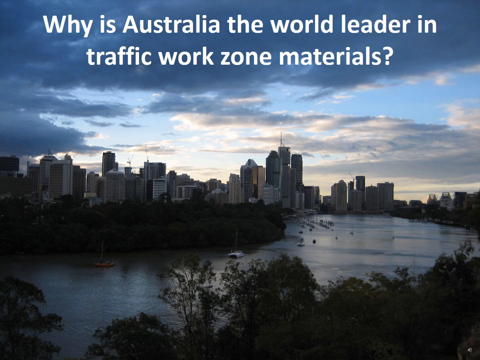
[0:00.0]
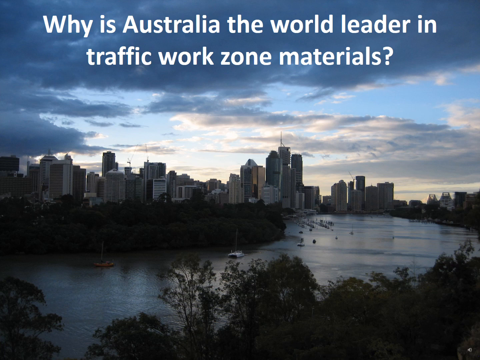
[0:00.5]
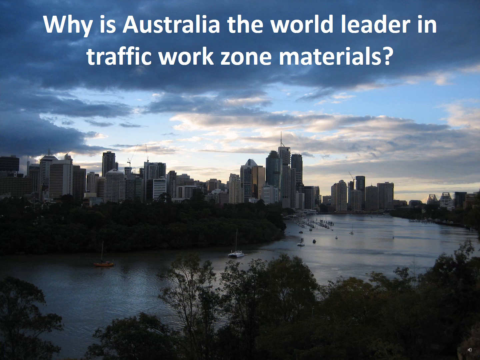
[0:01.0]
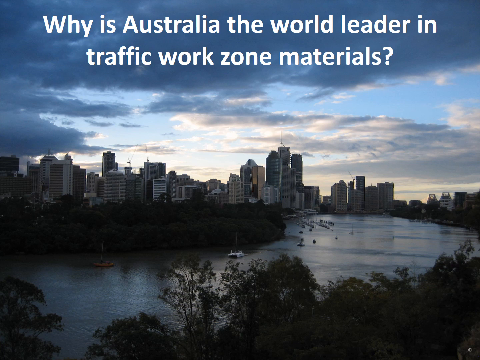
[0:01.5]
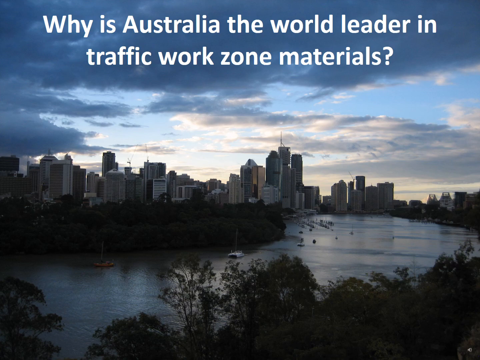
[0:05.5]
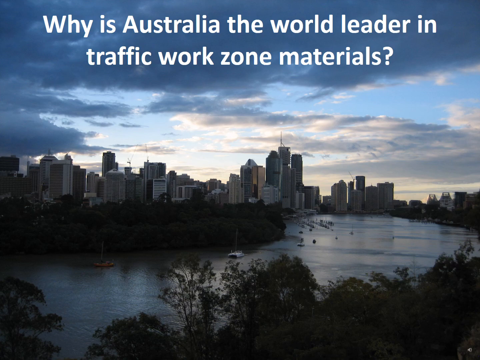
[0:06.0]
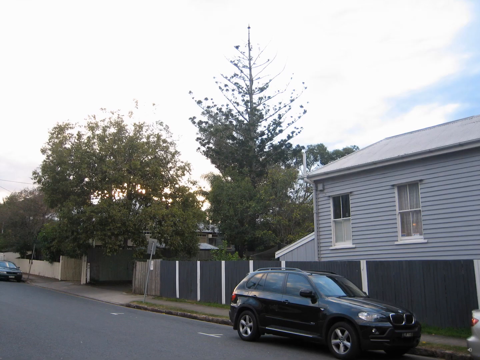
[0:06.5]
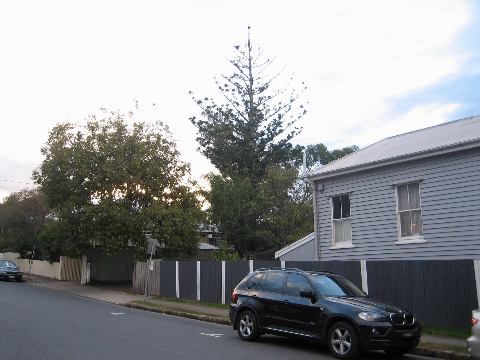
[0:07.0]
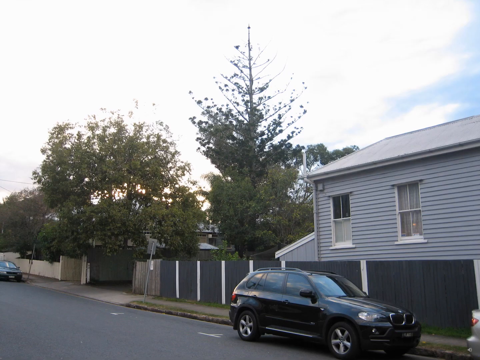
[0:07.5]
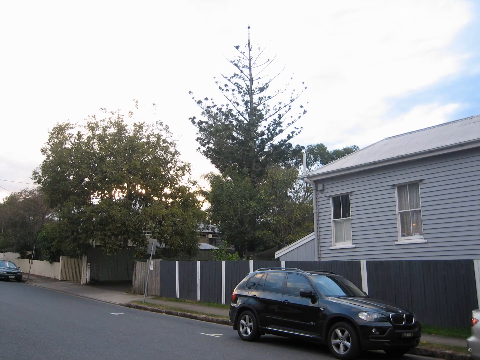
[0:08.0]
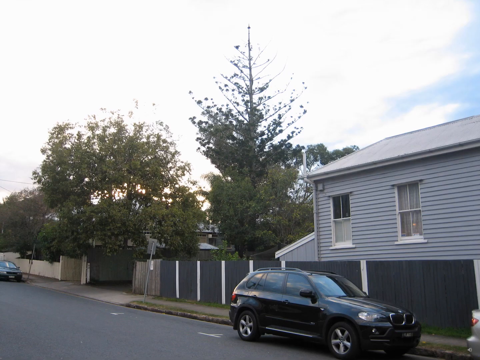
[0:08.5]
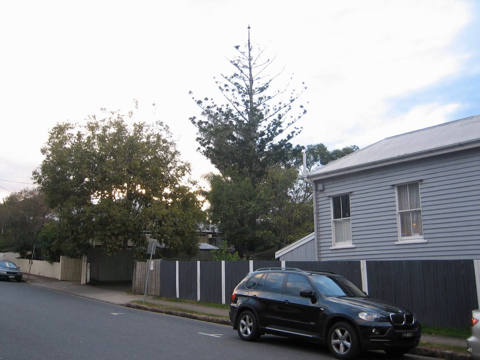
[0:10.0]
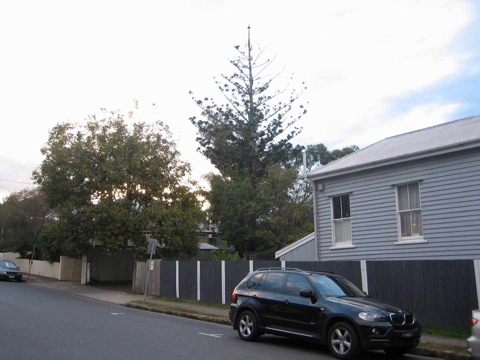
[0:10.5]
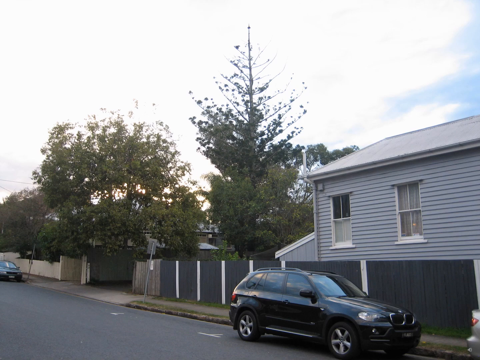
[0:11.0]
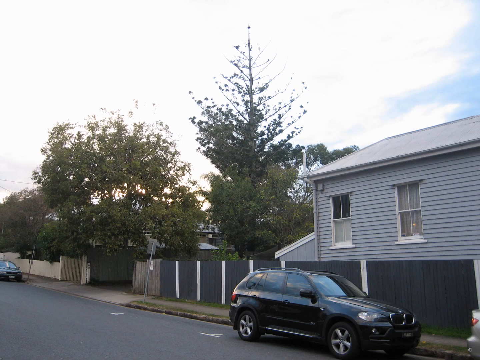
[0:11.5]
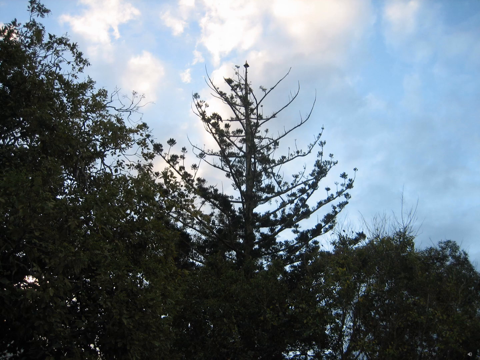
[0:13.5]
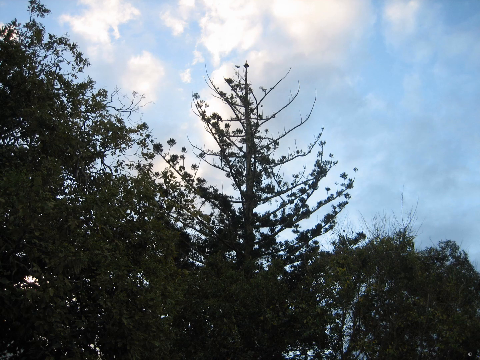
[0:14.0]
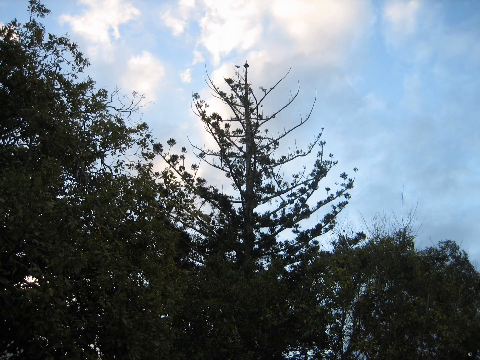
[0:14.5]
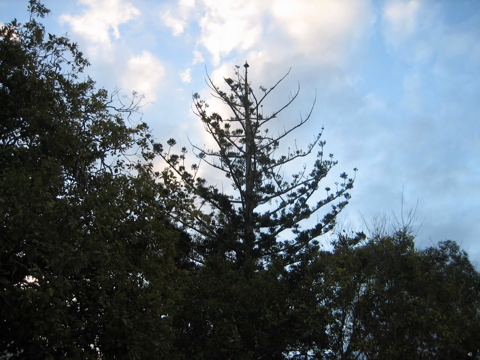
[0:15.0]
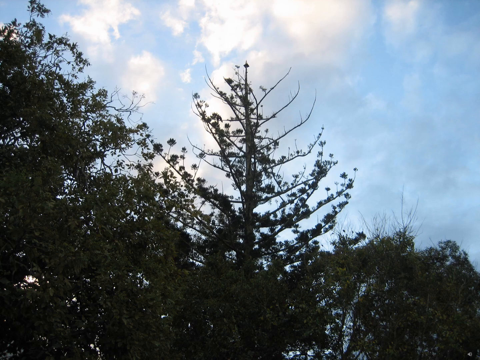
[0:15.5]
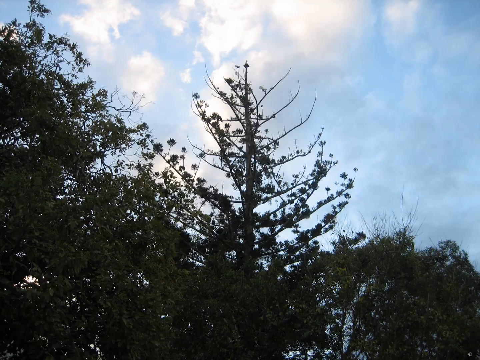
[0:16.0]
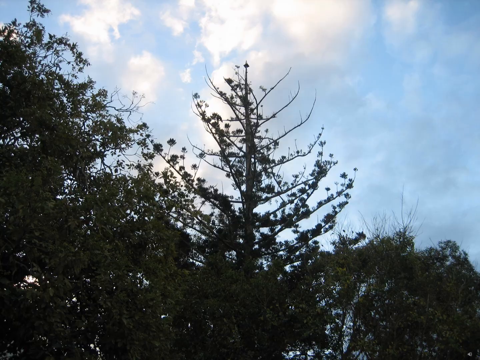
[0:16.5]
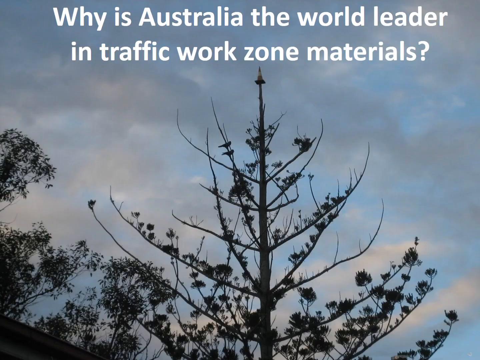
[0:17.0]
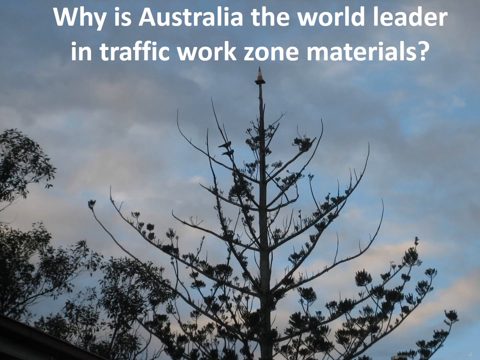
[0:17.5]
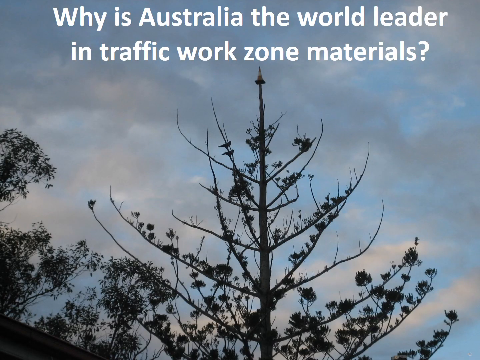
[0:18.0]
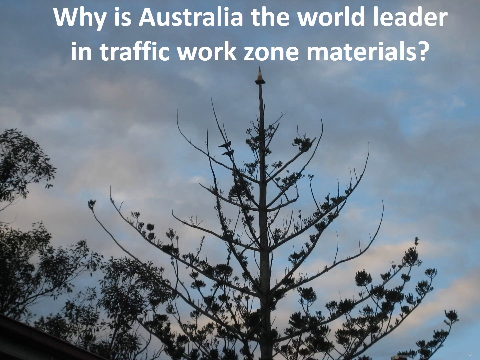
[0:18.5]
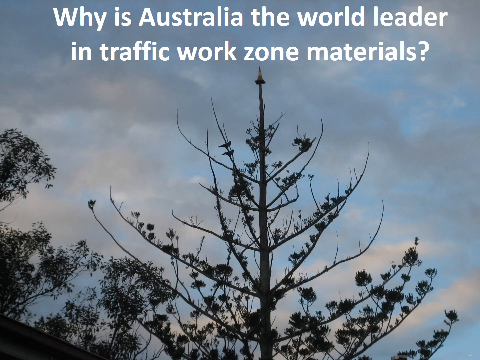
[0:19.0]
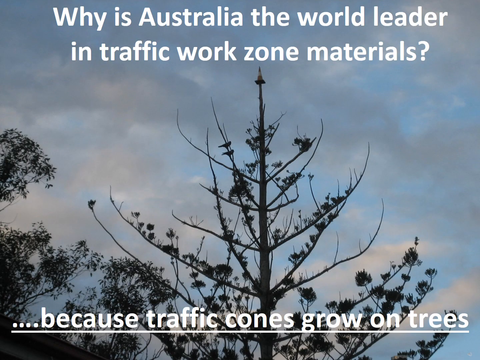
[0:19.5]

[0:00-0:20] The video opens on a city apparently in Australia, with white text at the top reading "why is Australia the world leader in traffic work zone materials?" In the background is a city at sunrise or sunset. It is mostly cloudy at the top and on the left, with thinner, sparser clouds in the center and on the right, and the sun comes through them. The huge city has many different tall buildings, and a river runs through it. The video then cuts to a residential neighborhood, presumably somewhere in Australia, with a grayish blue house on the right, a fence, cars parked on the street and trees in the background. The shot holds there, then focuses on what seems to be a dead or mostly dead pine tree. The text pops up at the top again, reading "why is Australia the world leader in traffic work zone materials?", and then text quickly appears at the bottom reading "because traffic cones grow on trees".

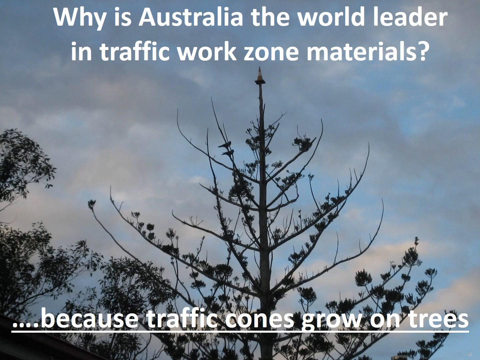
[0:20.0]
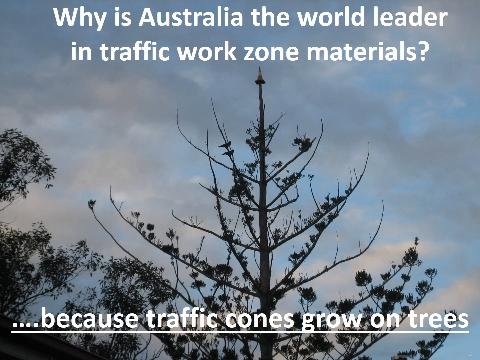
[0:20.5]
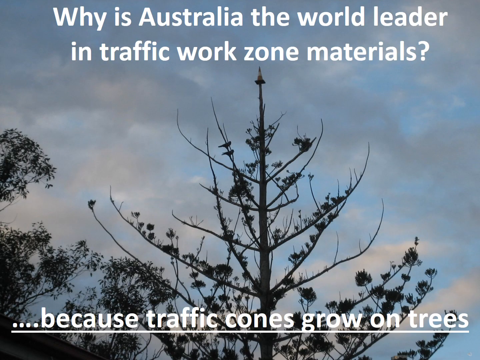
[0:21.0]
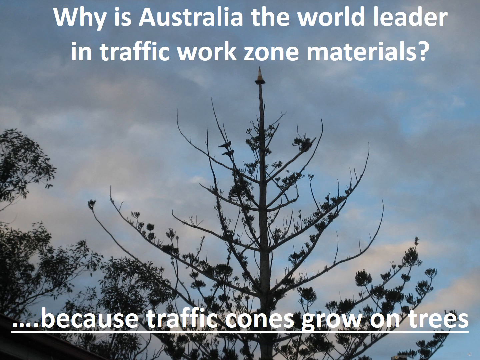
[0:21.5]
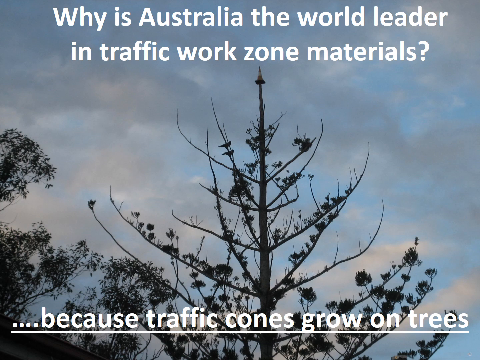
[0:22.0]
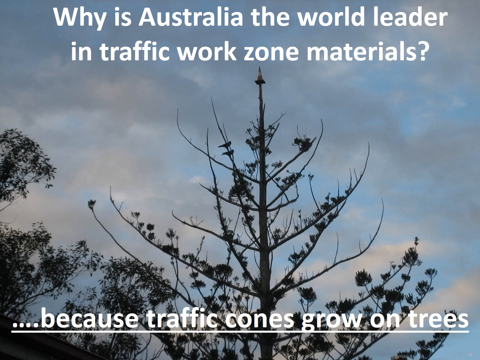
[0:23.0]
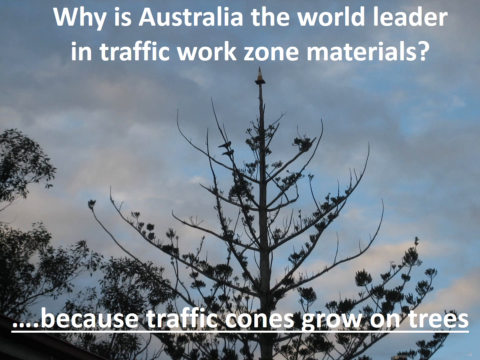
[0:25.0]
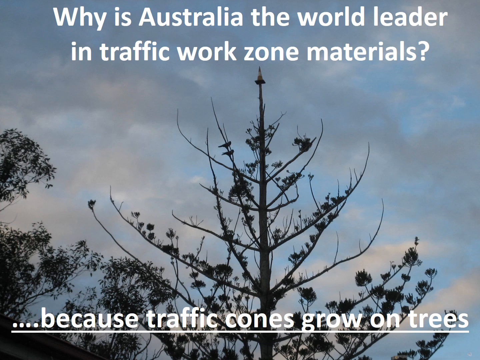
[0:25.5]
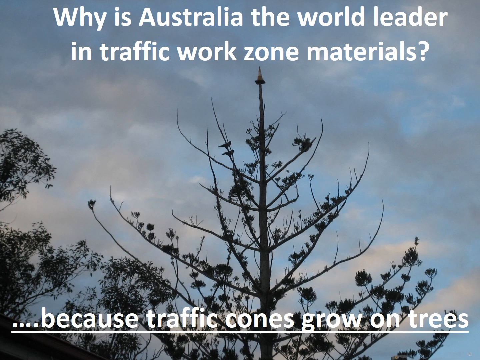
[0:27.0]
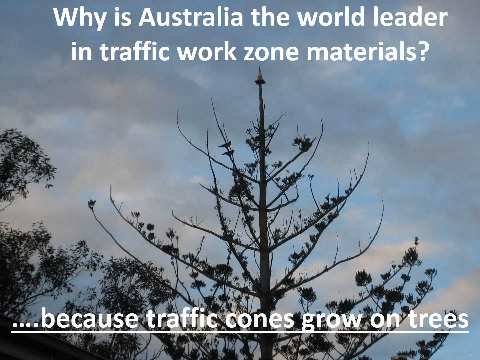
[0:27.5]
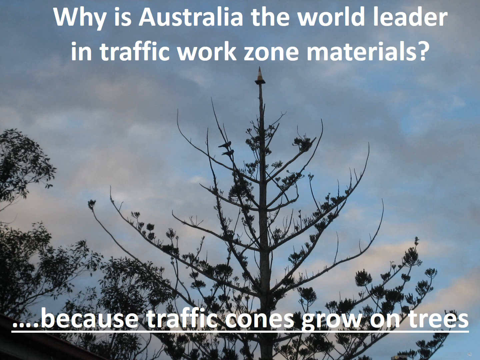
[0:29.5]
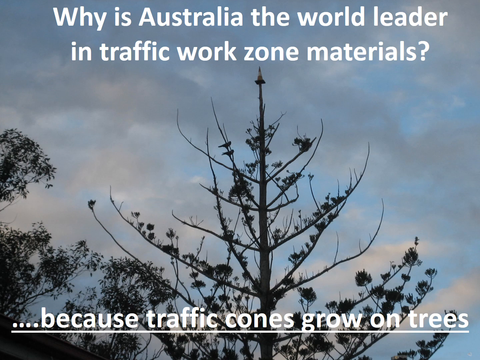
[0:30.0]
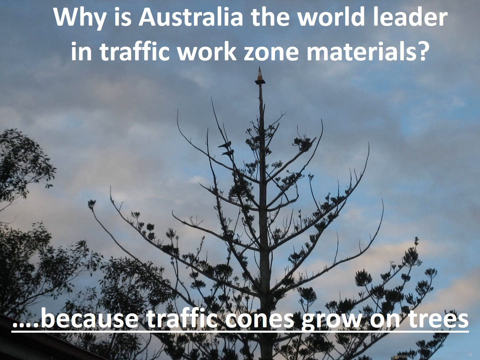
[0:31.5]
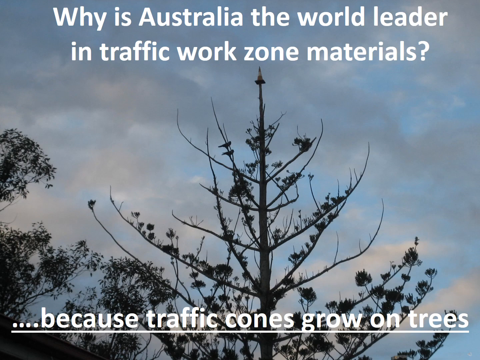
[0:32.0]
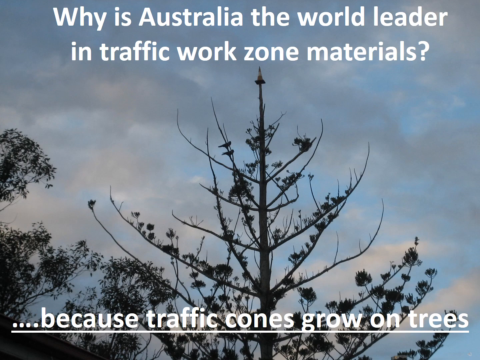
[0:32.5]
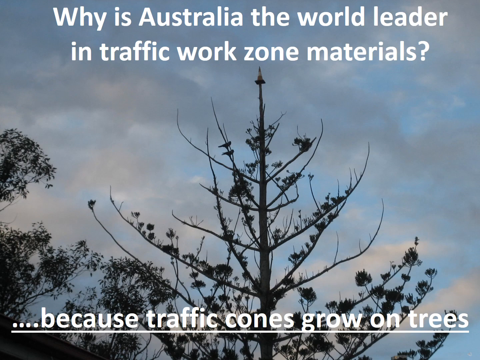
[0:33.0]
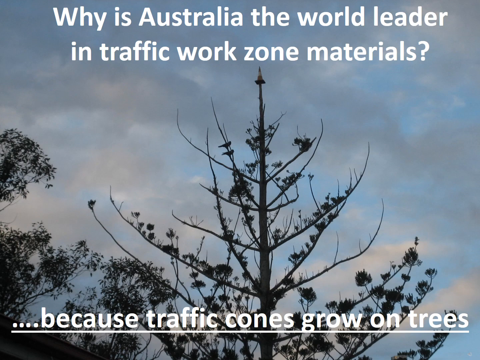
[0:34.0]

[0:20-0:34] The shot stays on the half-dead pine tree against a very cloudy background. White text at the top reads "Why is Australia the world leader in traffic work zone materials", and text at the bottom reads "because traffic cones grow on trees". The picture and text hold without change for the whole shot.